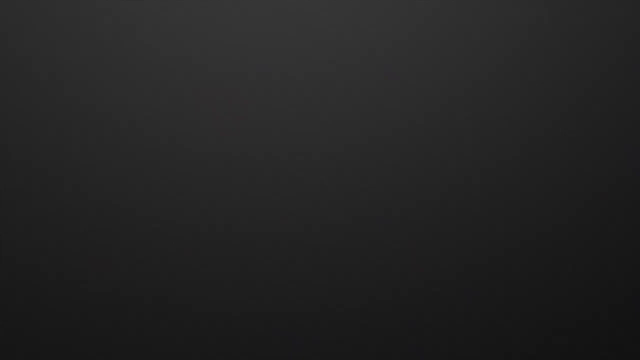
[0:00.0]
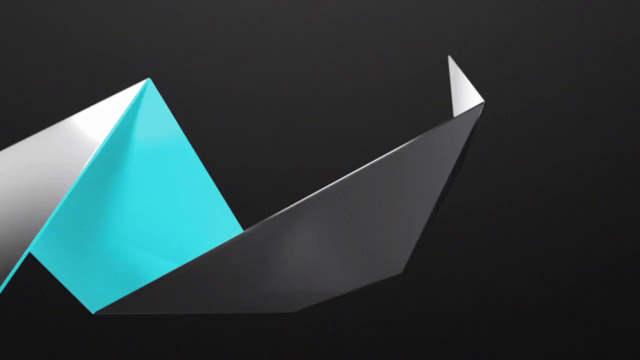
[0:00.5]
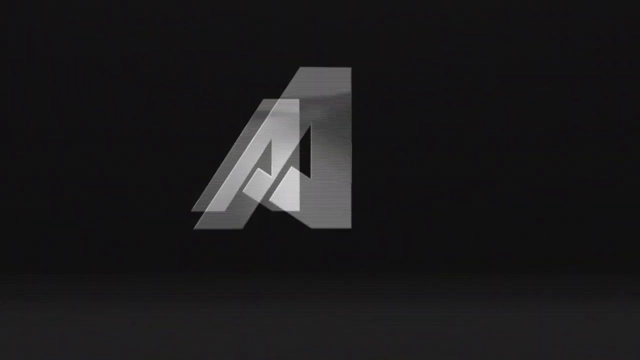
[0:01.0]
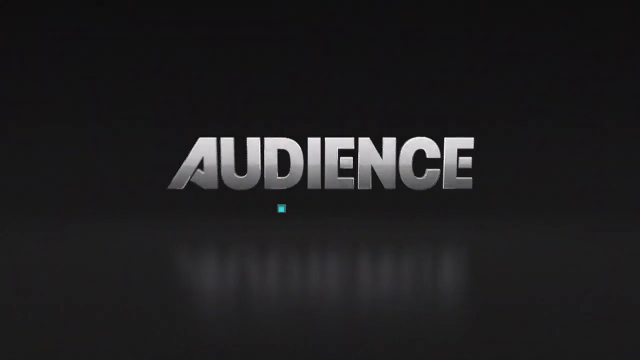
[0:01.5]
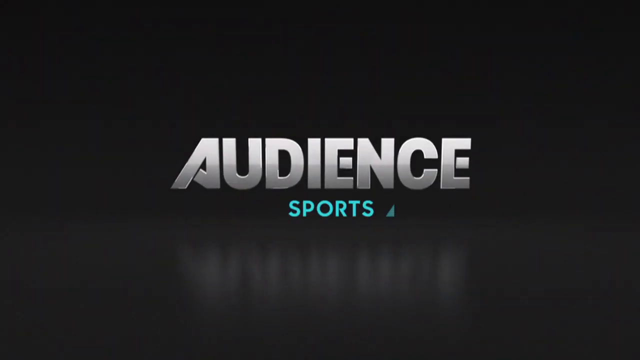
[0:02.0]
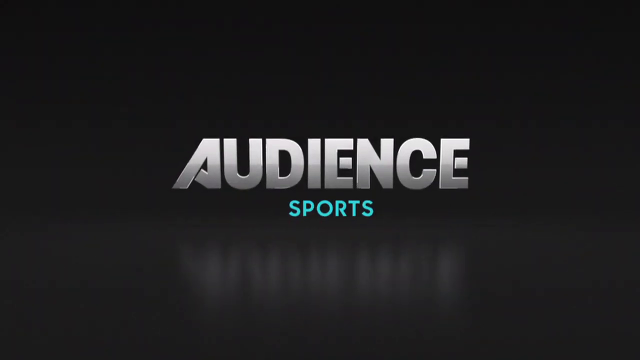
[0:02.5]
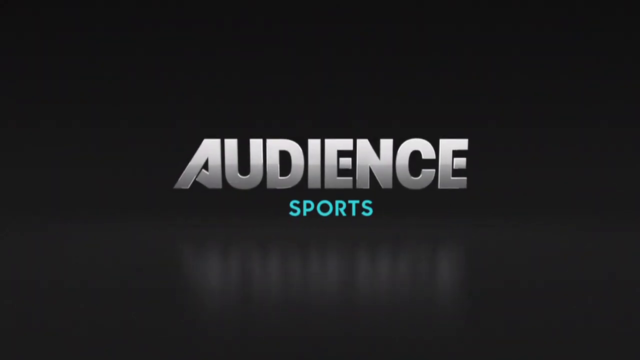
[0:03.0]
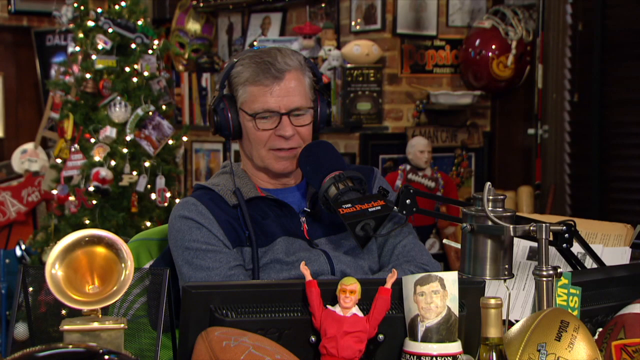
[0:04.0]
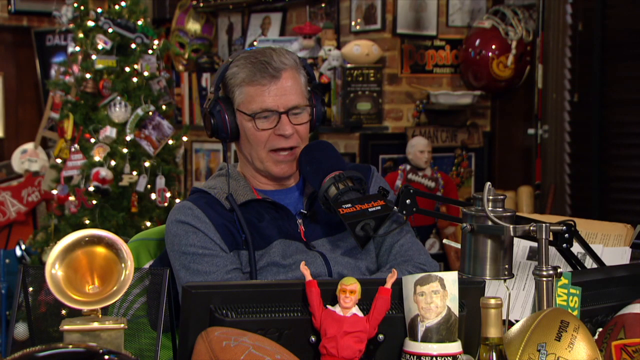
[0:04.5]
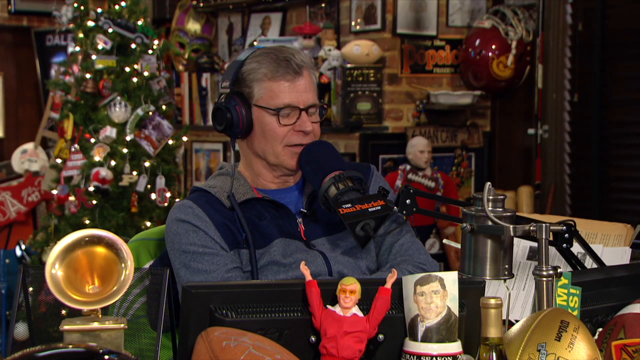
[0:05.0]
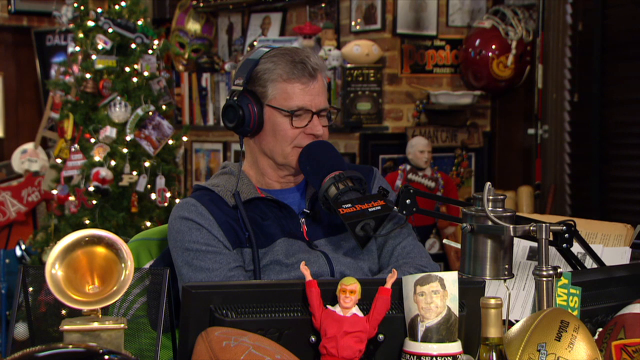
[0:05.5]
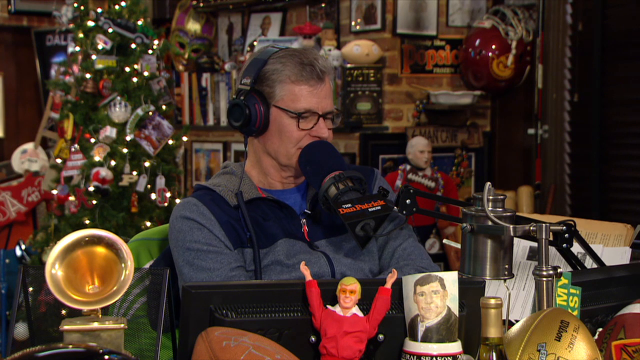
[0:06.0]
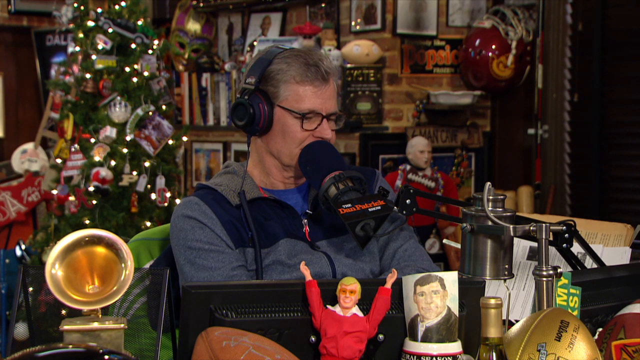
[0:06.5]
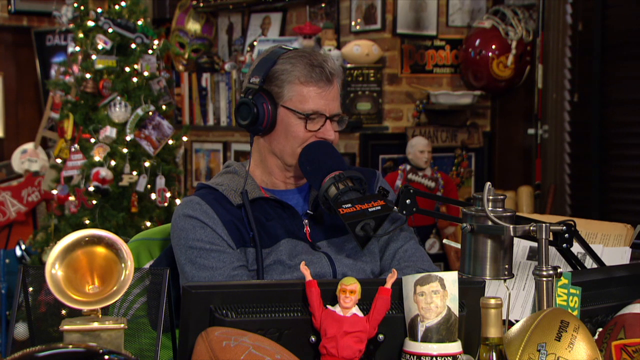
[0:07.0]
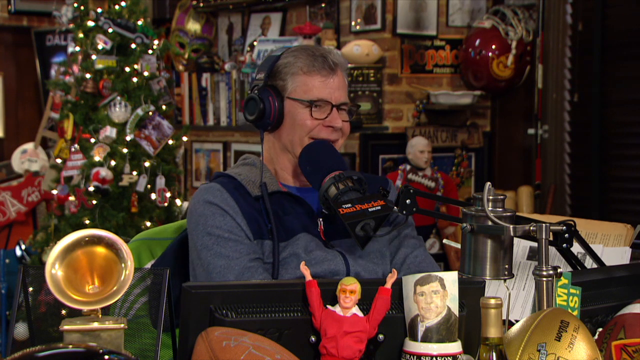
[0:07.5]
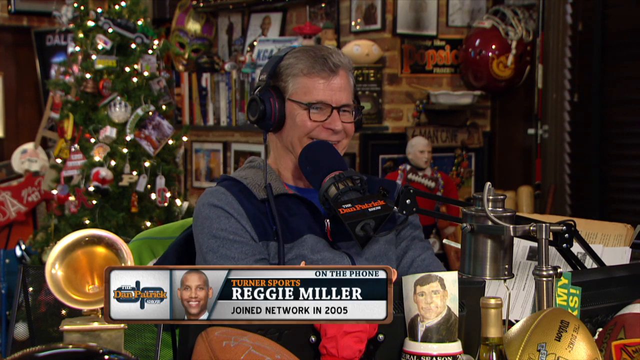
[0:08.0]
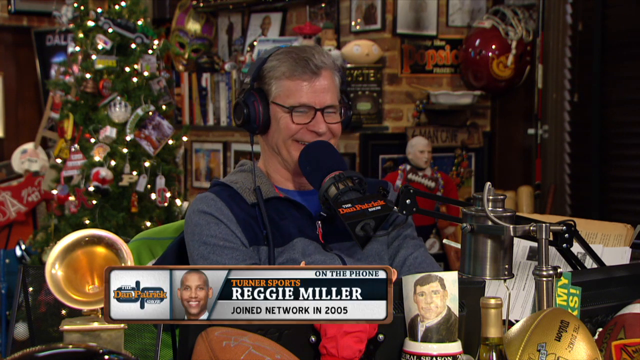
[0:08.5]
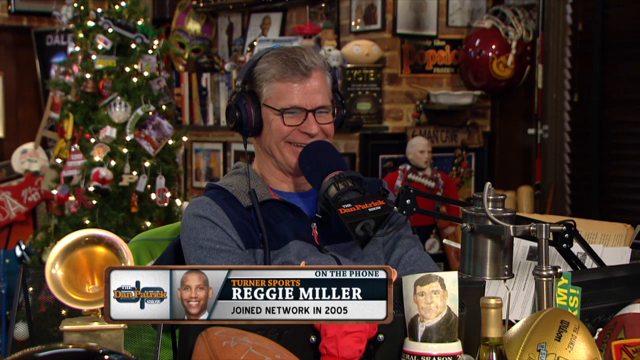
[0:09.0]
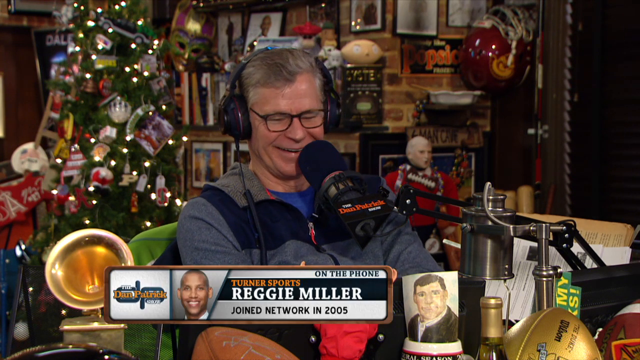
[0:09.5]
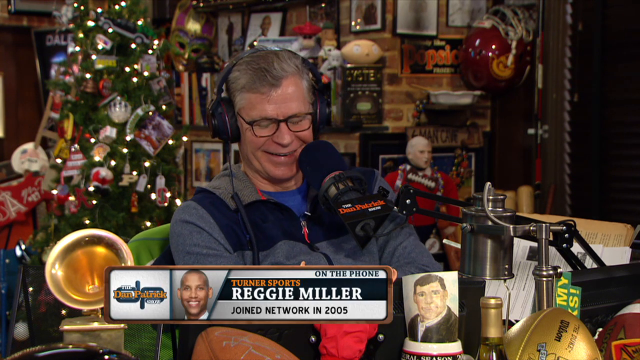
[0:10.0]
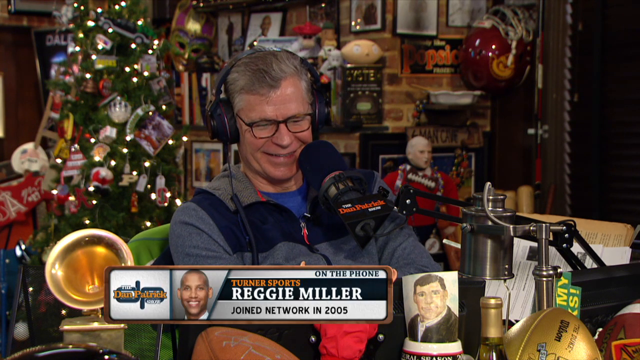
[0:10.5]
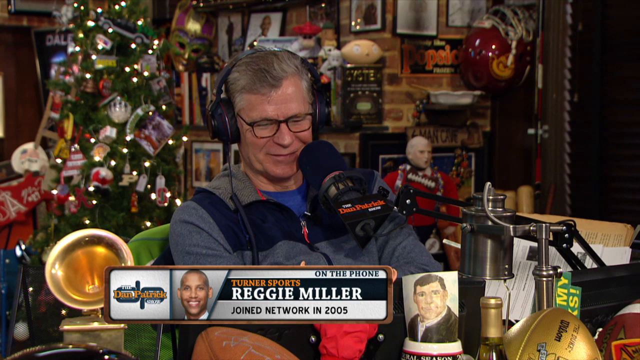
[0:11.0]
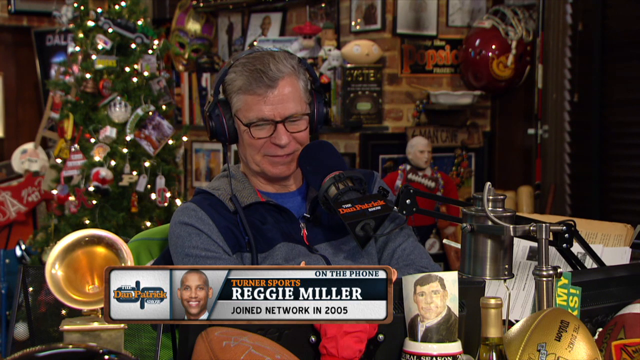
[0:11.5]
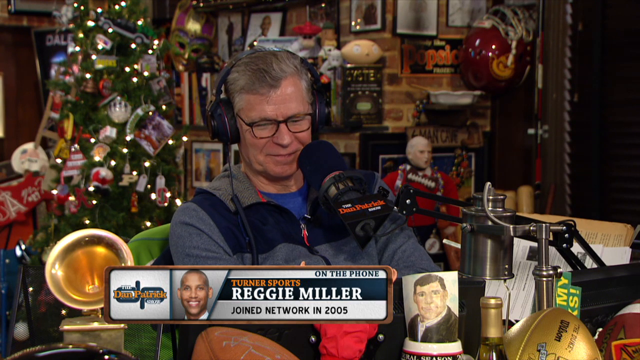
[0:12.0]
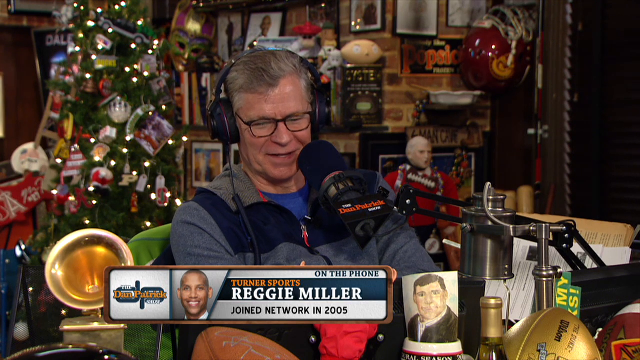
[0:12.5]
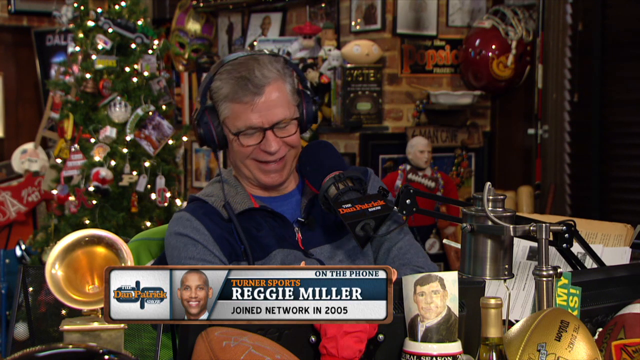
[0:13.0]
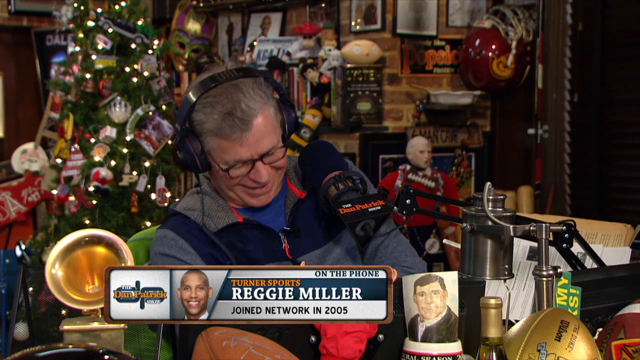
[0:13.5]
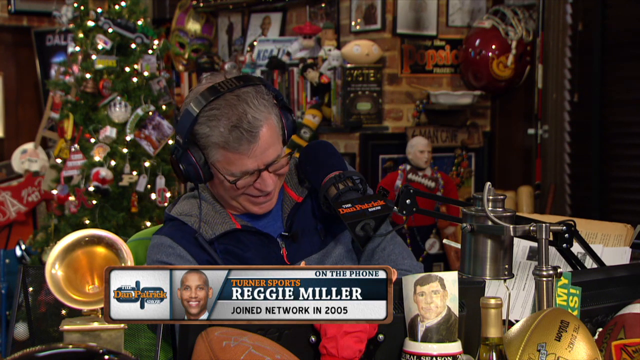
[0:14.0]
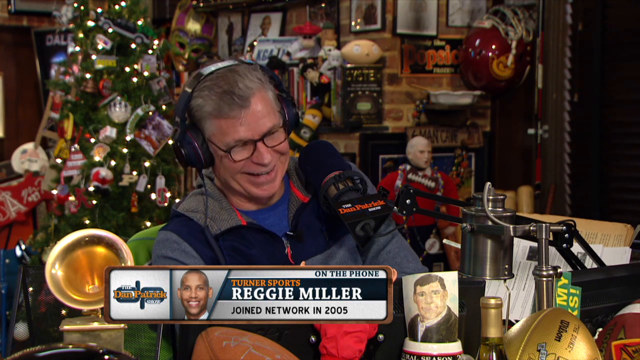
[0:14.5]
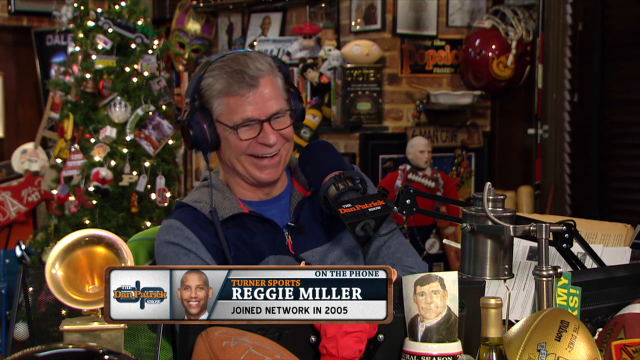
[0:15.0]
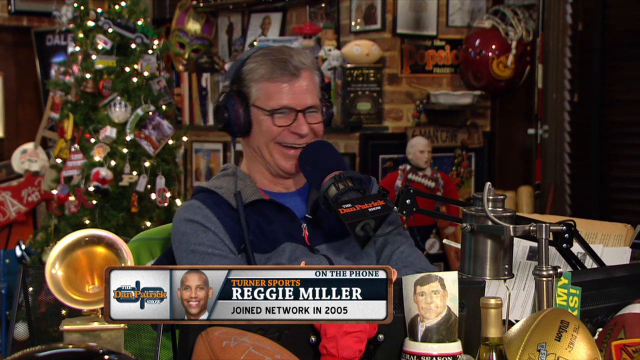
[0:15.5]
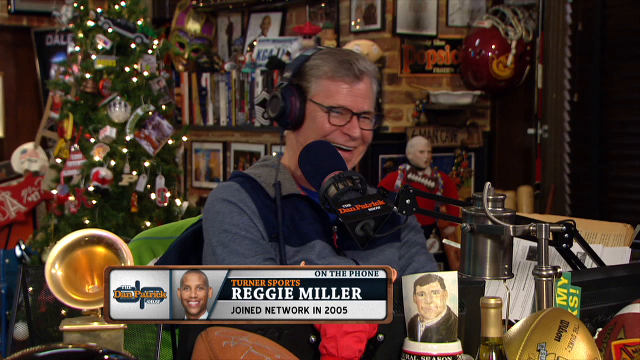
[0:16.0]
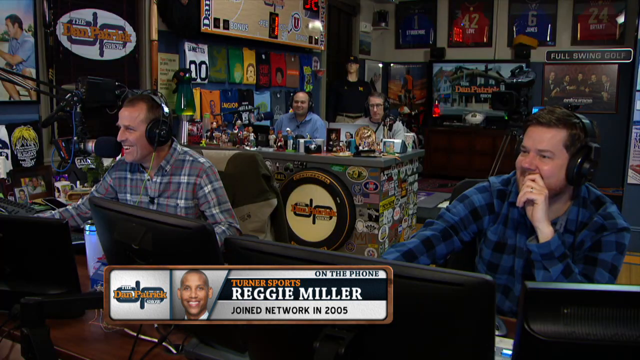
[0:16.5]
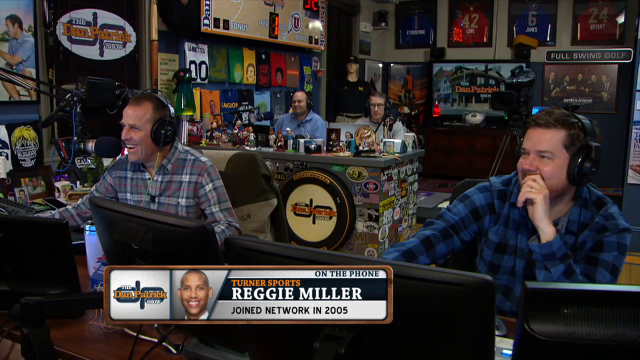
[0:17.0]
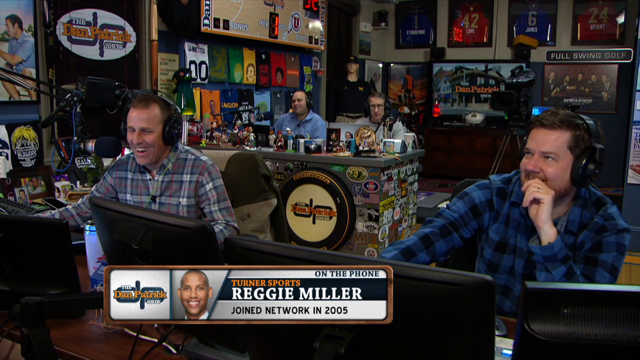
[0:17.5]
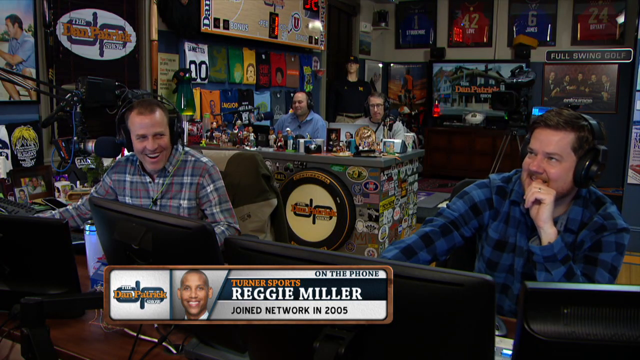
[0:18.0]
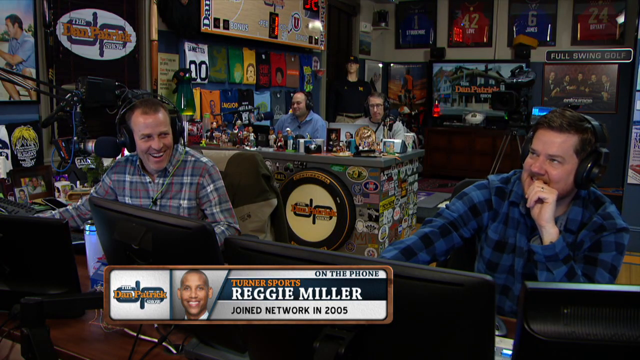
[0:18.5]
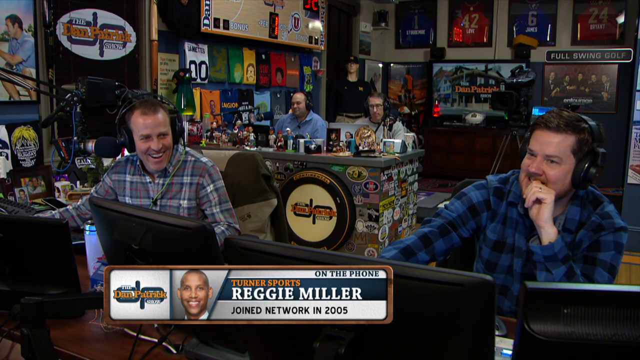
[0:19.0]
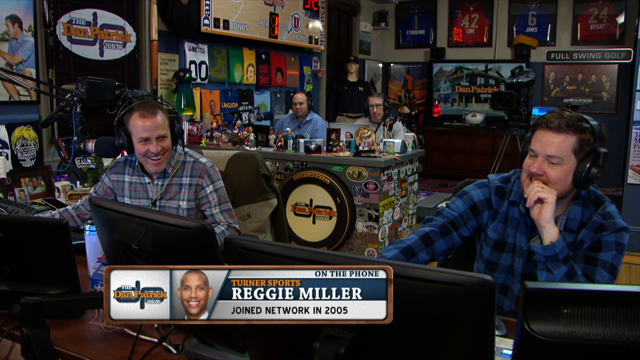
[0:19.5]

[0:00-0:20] The video opens with an animated shot: a letter A appears with some geometric blue shapes coming into play, and then the word "audience" suddenly appears. The A is somewhat unique at the bottom, where it comes down and tucks behind. Underneath, in a typewriter-like style, the word "sports" appears in teal, in all caps. A reflection of "audience" shows on the black floor. The scene then shows a man doing some kind of podcast, with a large foam microphone in front of him; it is the Dan Patrick Show. A decorated Christmas tree with ornaments and white lights is in the back. He appears to have his arms folded and wears a zip-up jacket, along with big black over-the-ear headphones. Pictures hang on a brick wall behind him, a doll is visible in the background, and another doll with blonde hair and its arms out in a V is in front of him. He speaks and laughs, apparently talking to Reggie Miller on the phone, mostly listening and giggling. To his left is some kind of gold trumpet, and there is some kind of picture or mug showing what looks like a mural of a guy in a jacket, possibly him when he was younger. The view then goes to the crew: two guys in the far back sit at a desk with a lot of clutter all around it, with framed jerseys hanging in the back. Two more guys sit in front, both in flannel; one has white and red flannel, and the guy on the right has a blue checkered flannel, and they sit with rows of monitors across the desk.